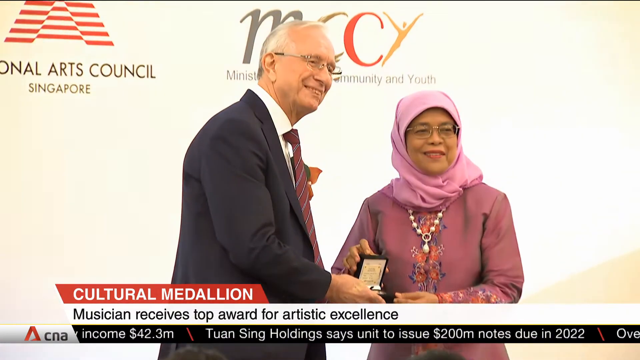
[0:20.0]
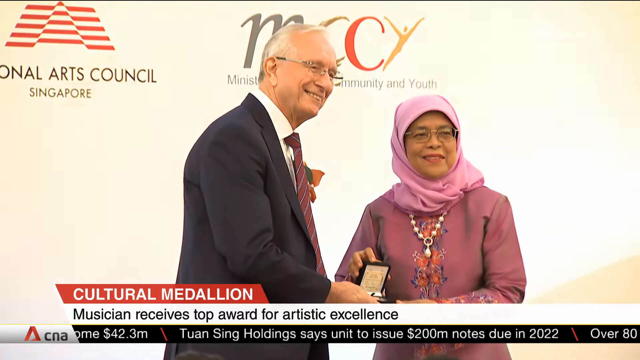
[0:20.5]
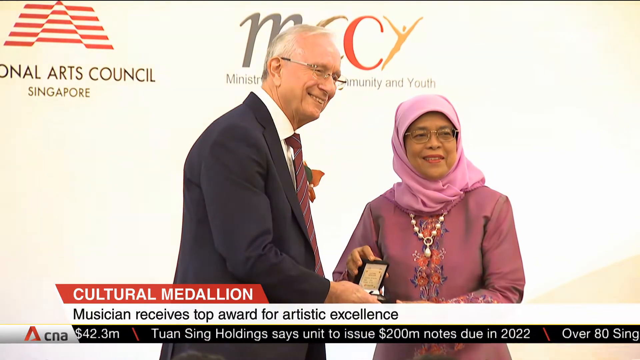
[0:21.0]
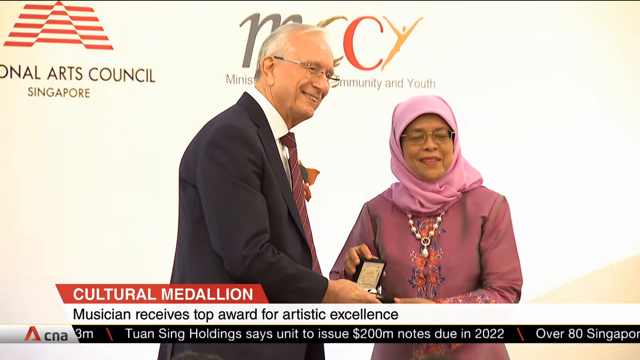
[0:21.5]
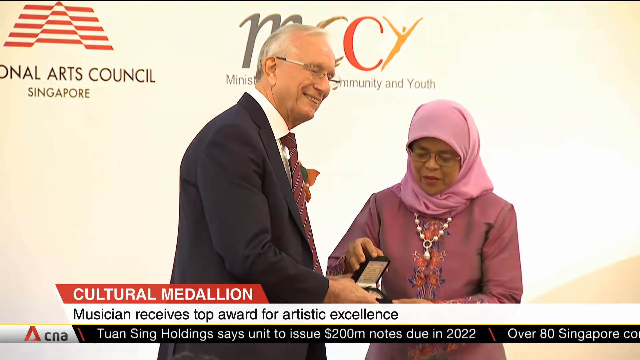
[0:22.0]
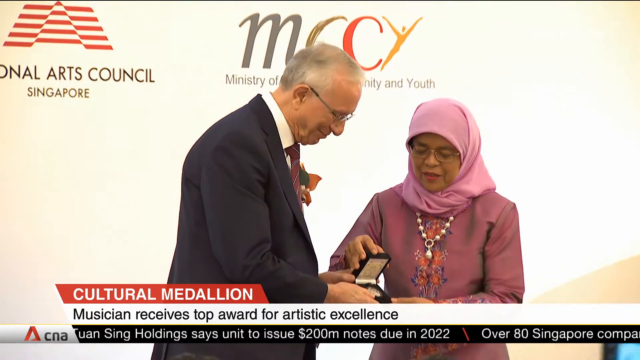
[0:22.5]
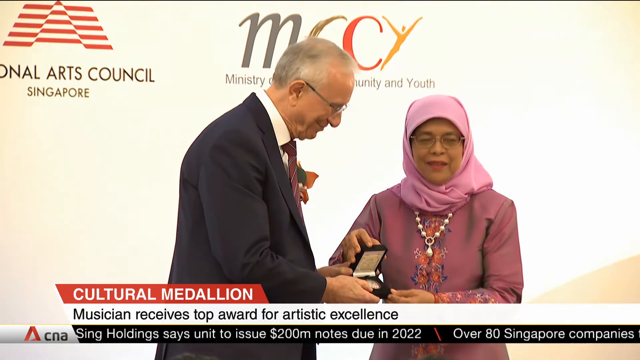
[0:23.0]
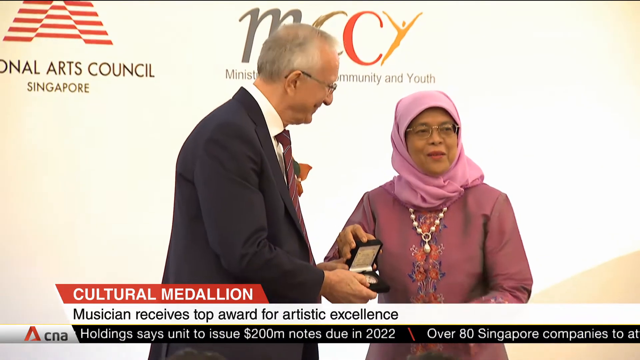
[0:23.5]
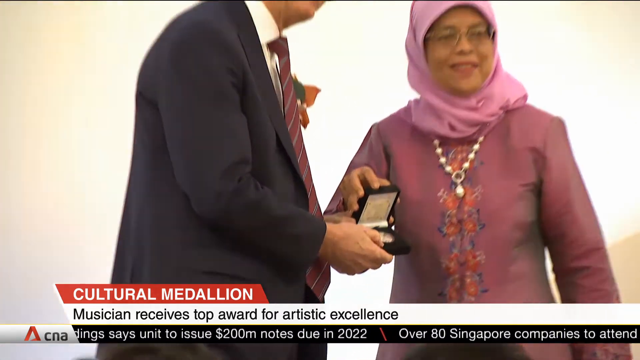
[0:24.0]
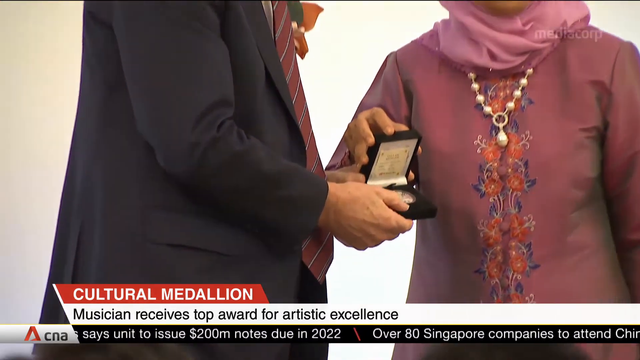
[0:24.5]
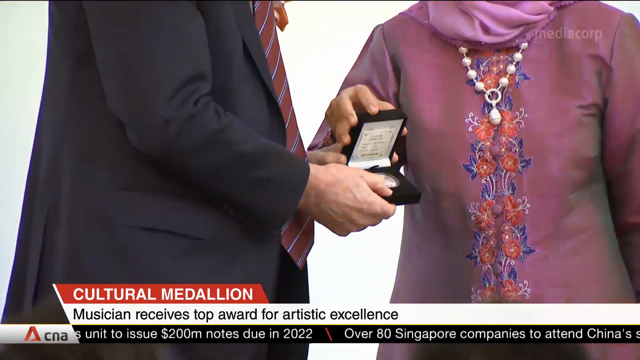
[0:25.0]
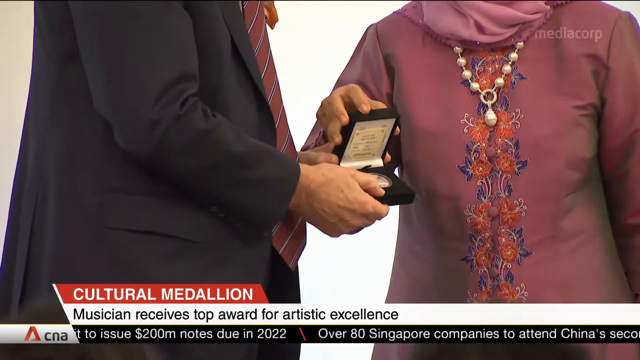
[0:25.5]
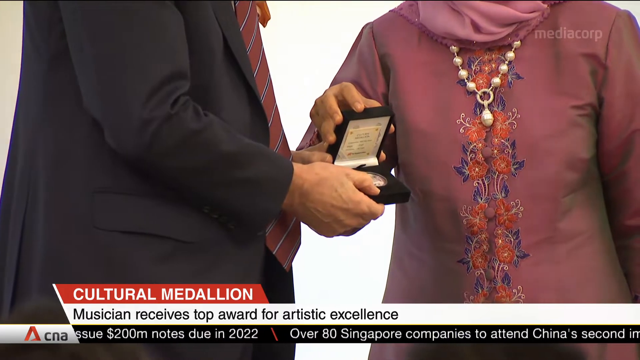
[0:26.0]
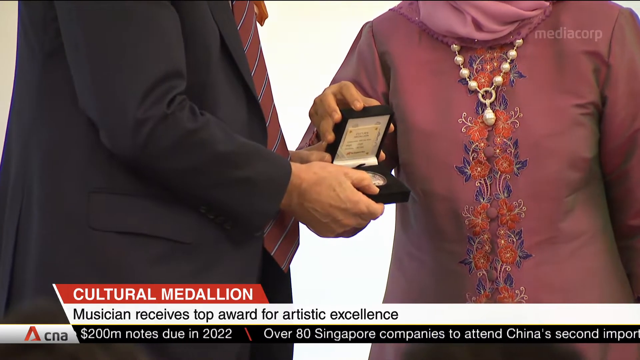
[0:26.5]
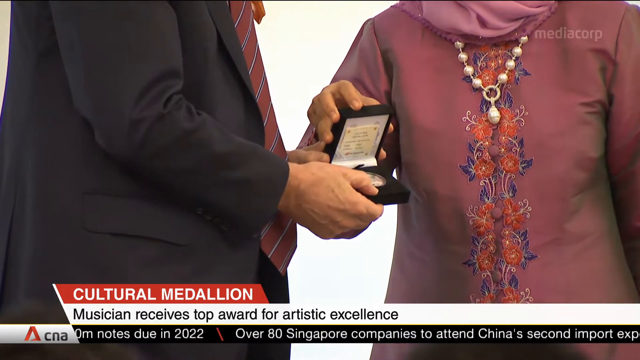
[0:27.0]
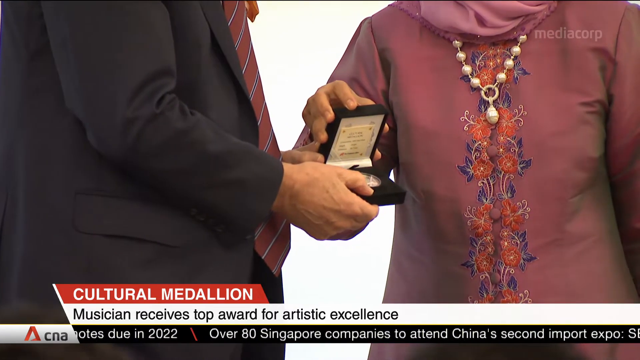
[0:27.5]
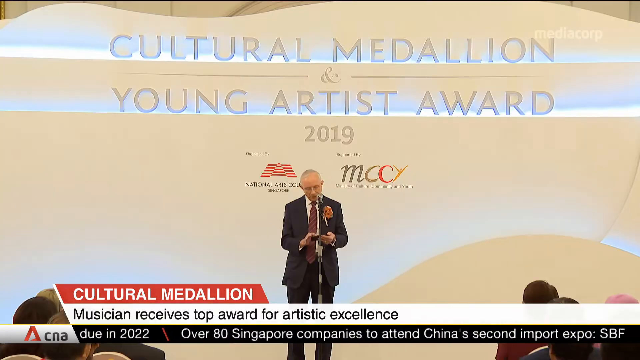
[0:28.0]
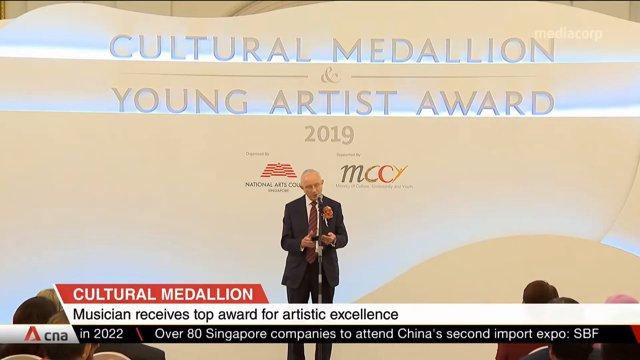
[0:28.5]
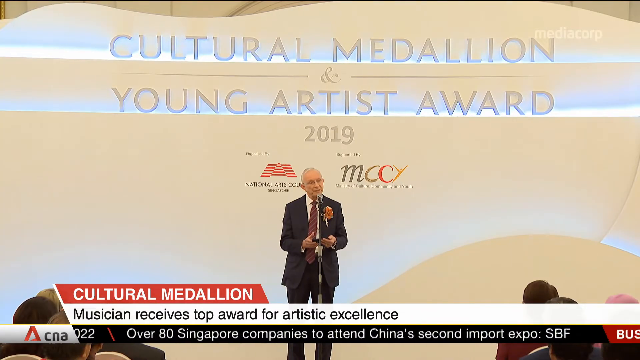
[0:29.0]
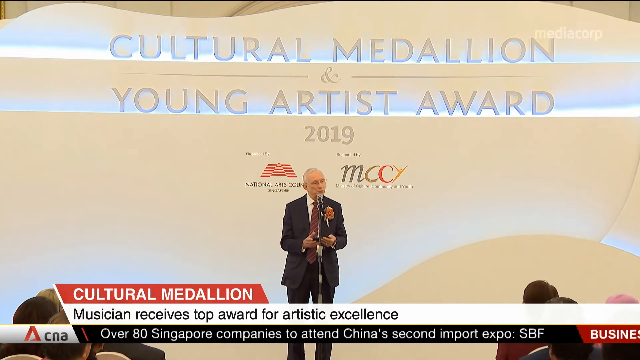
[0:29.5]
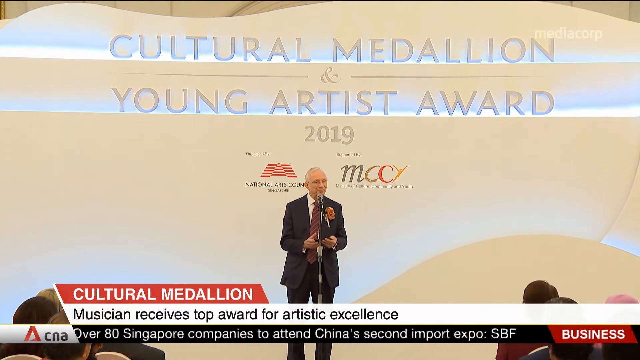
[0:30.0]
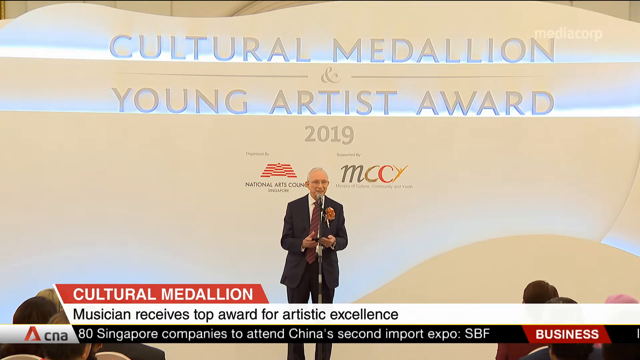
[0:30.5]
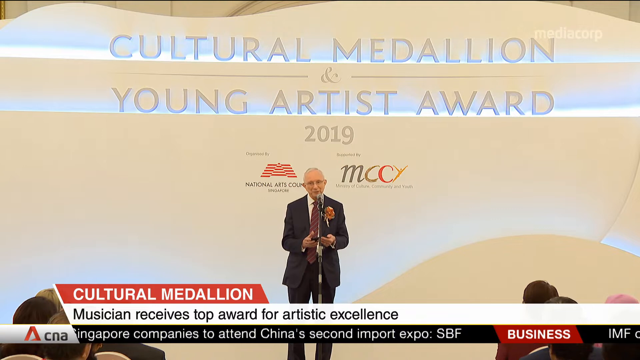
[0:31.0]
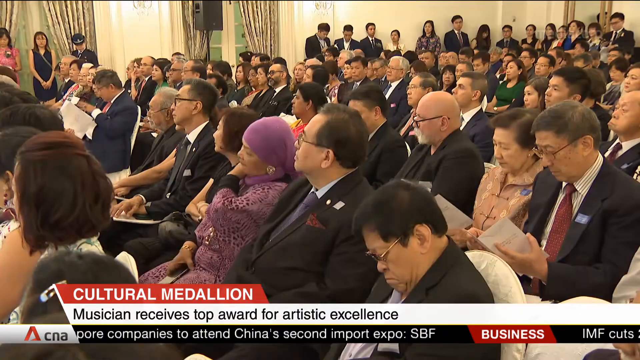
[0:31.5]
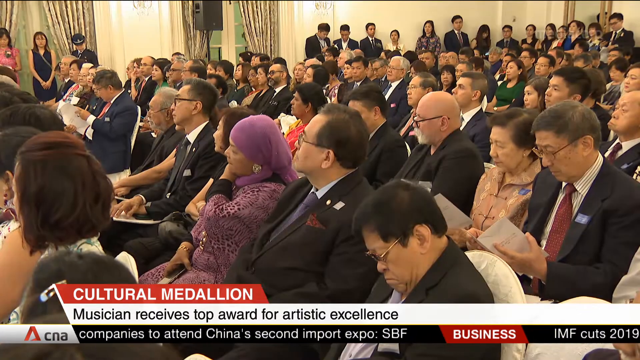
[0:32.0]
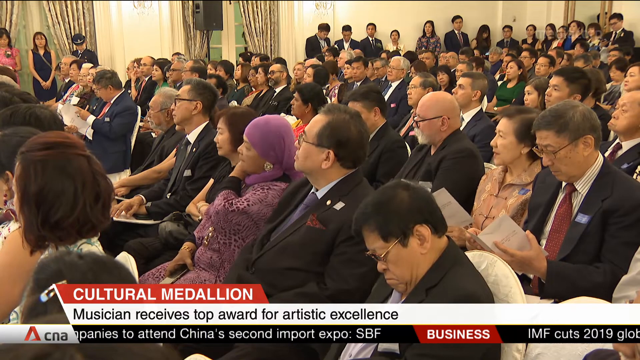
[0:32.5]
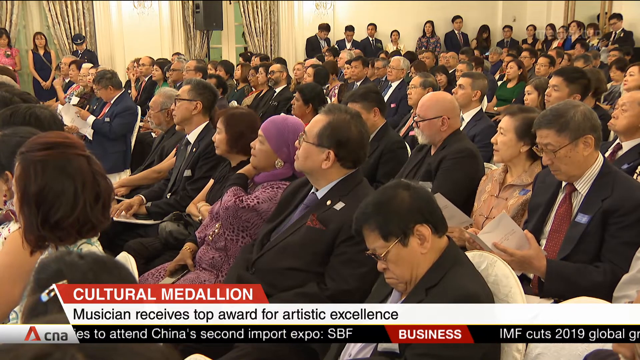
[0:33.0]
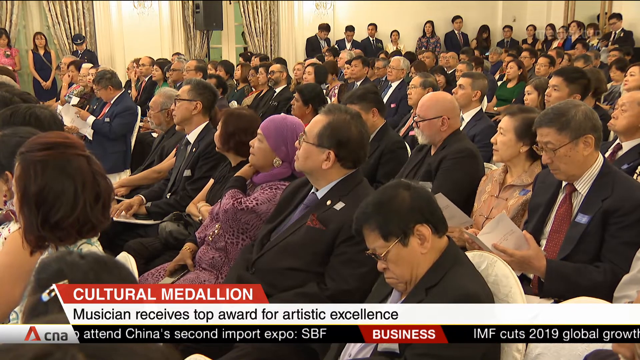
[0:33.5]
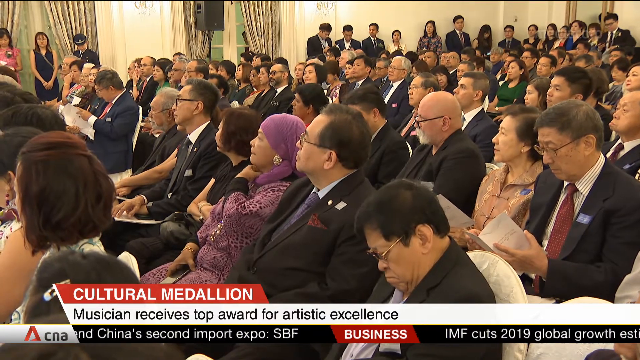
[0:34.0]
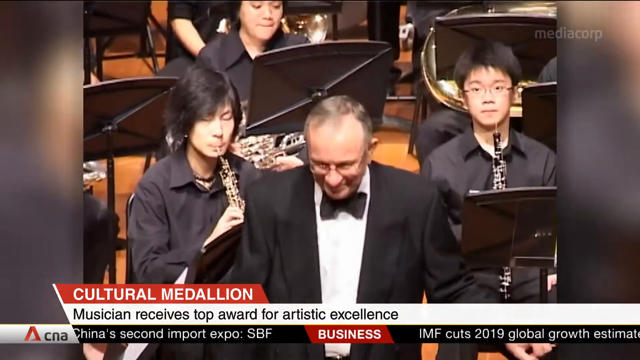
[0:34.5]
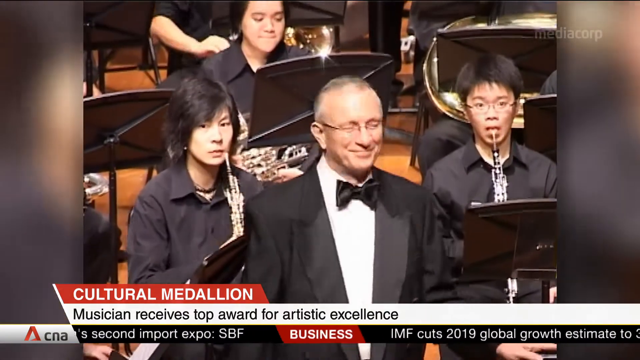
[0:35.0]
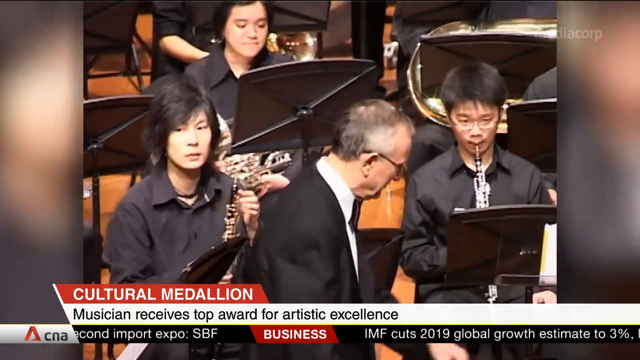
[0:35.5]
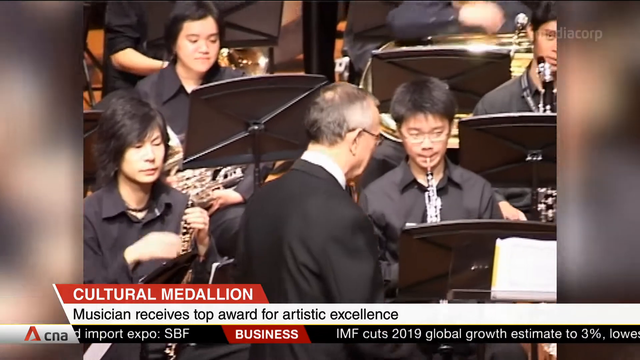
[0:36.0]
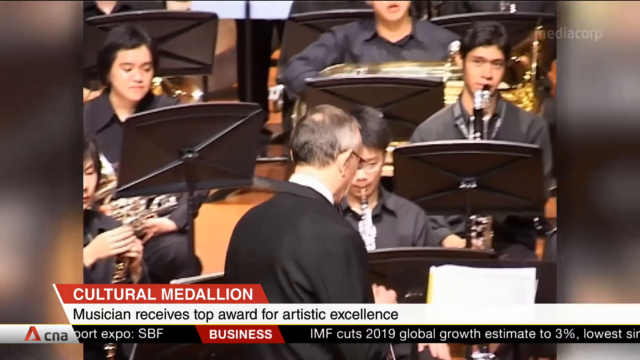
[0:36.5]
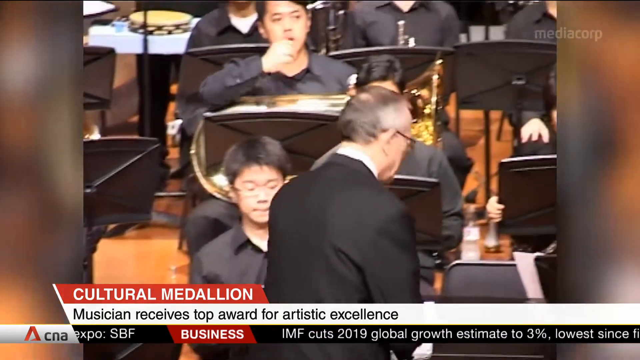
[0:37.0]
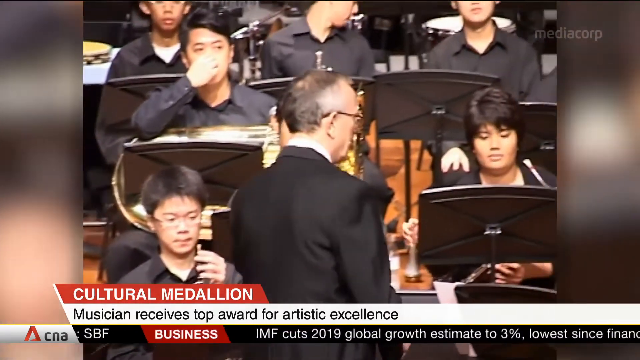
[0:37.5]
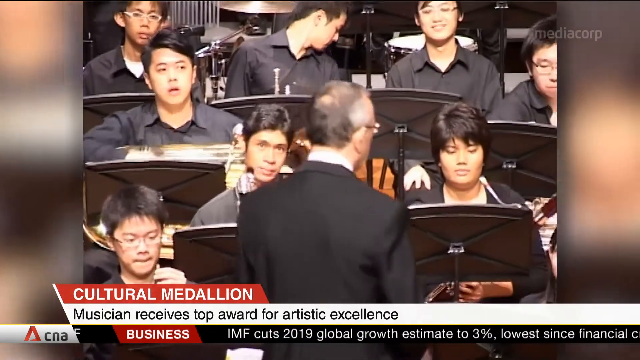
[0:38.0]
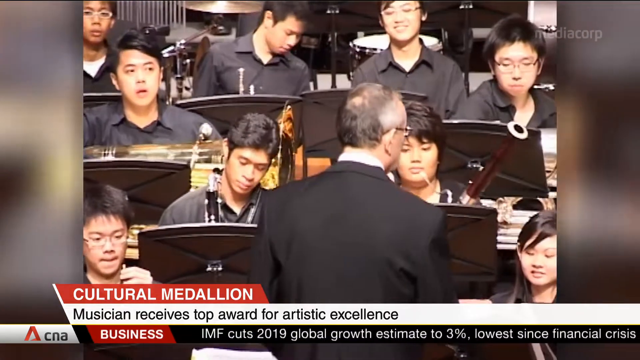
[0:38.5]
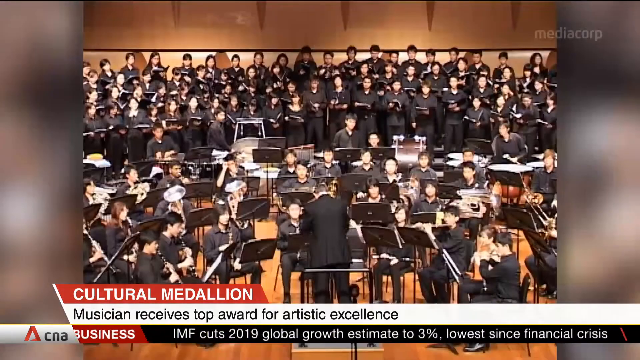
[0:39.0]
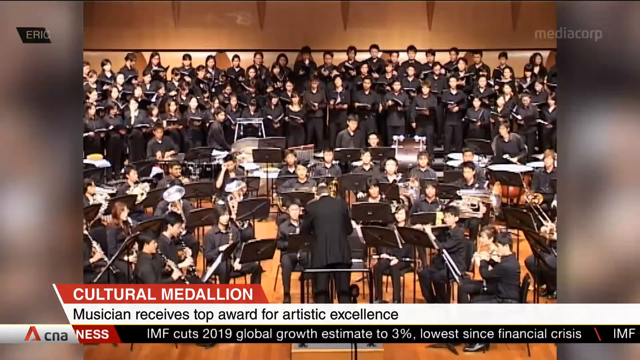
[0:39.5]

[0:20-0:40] The elderly gentleman and the woman in the mauve-colored dress pose for a photo, holding the award between them. A close-up of the award follows. The elderly gentleman then gives a speech on stage, standing at a microphone. Behind him is a graphic backdrop reading "Cultural Medallion and Young Artist Award 2019," with sponsor logos below it. A shot of the audience shows a packed room with many people, many of whom look to be Singaporean, all dressed very nicely; it seems to be a fancy event. Toward the end, the elderly gentleman is shown conducting an orchestra.